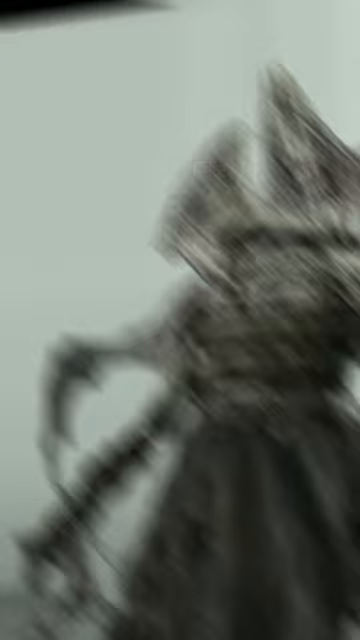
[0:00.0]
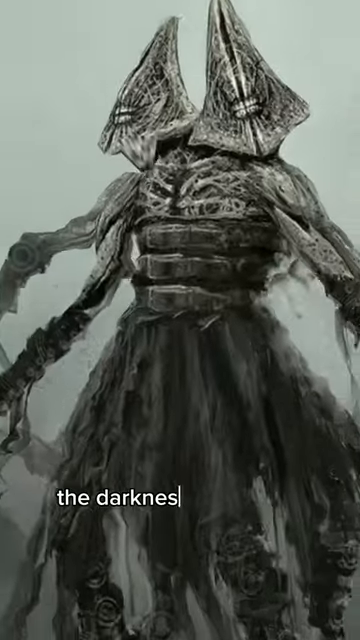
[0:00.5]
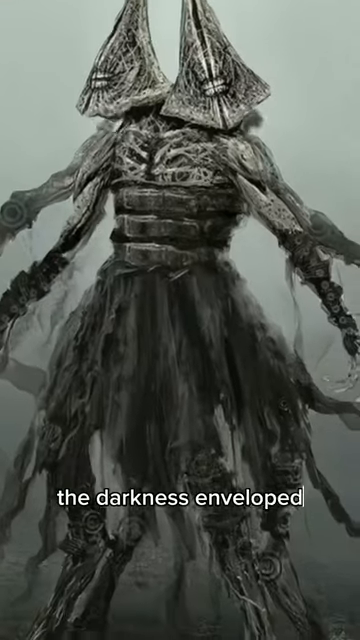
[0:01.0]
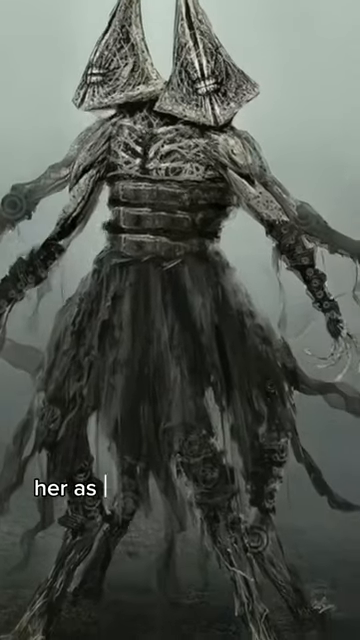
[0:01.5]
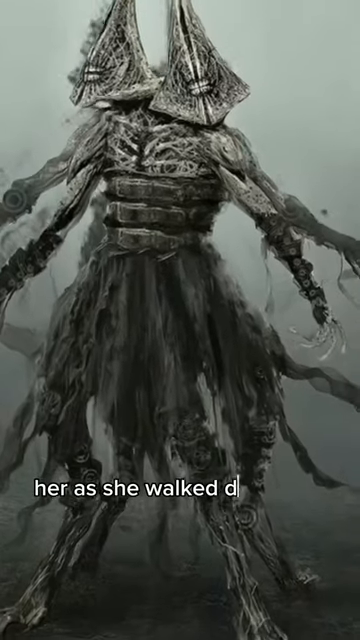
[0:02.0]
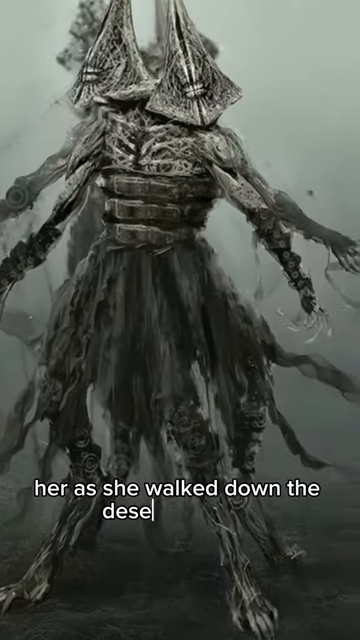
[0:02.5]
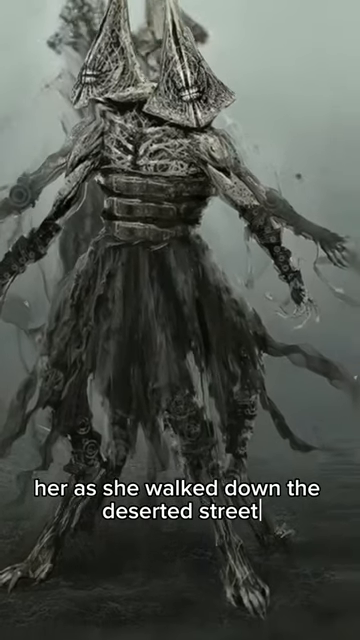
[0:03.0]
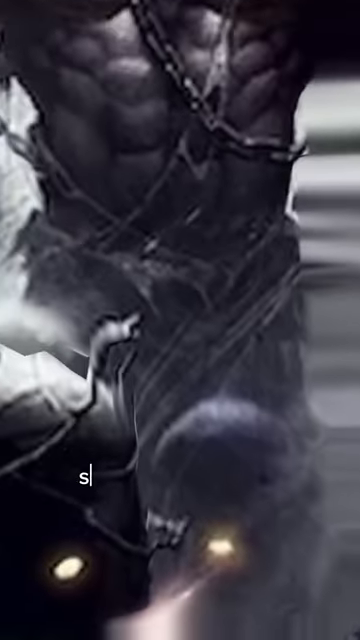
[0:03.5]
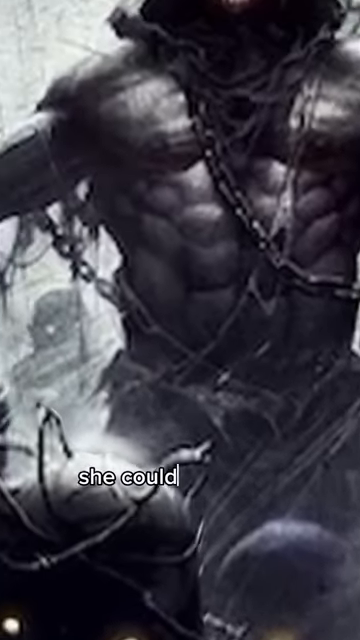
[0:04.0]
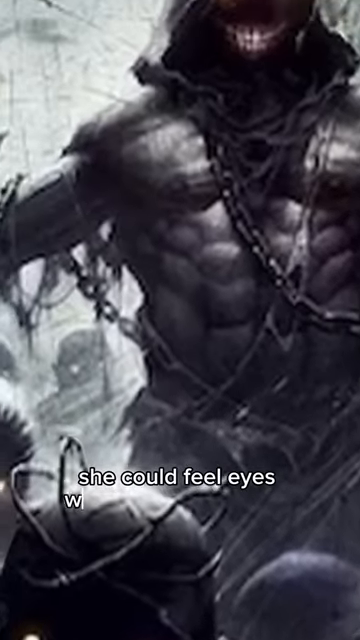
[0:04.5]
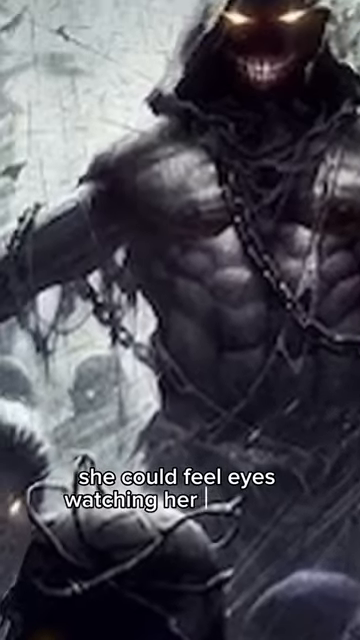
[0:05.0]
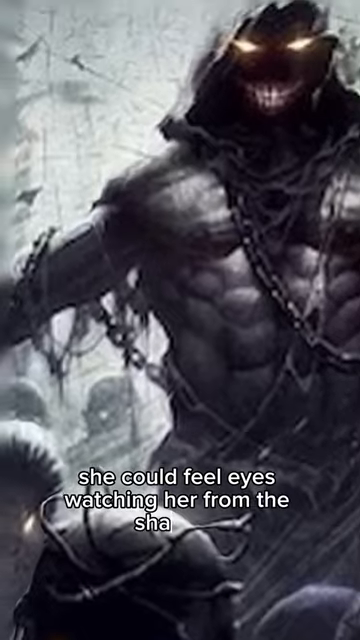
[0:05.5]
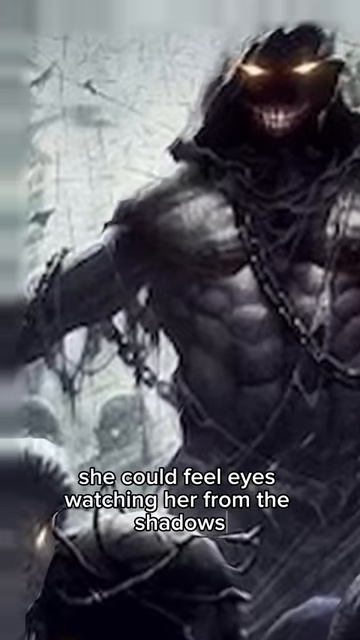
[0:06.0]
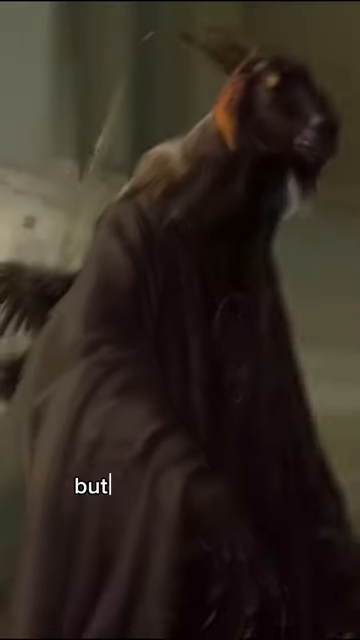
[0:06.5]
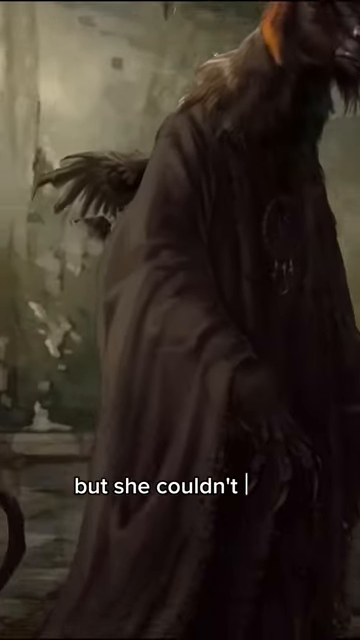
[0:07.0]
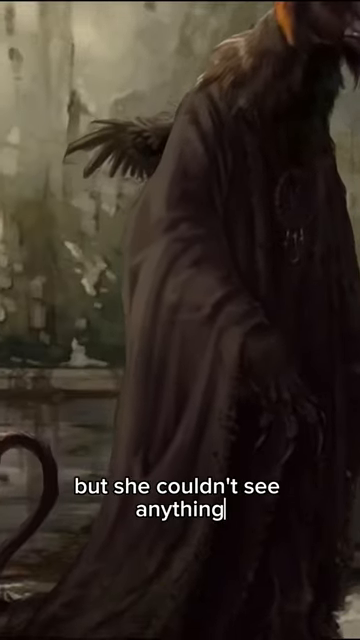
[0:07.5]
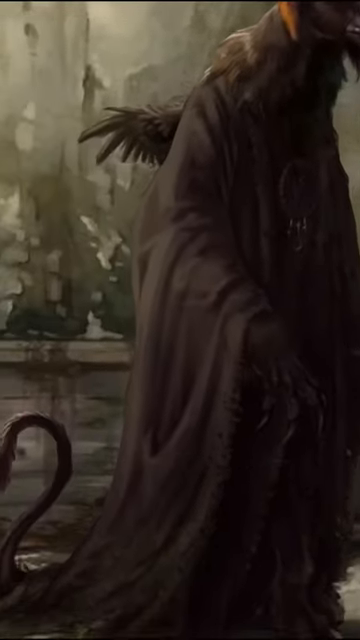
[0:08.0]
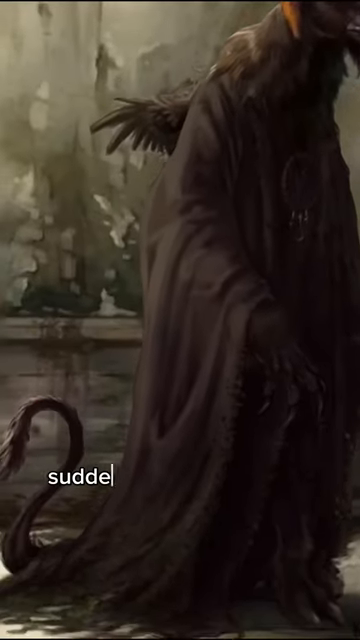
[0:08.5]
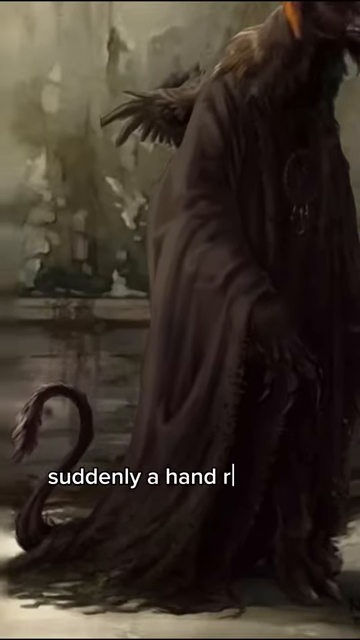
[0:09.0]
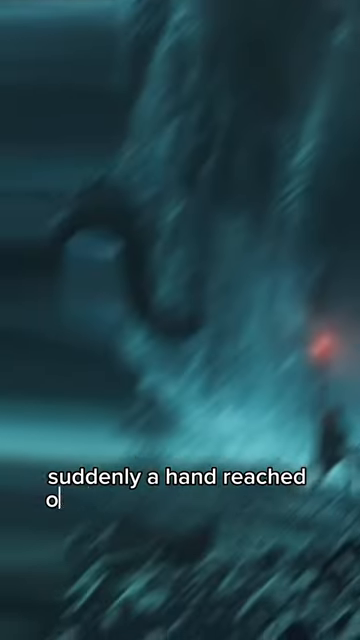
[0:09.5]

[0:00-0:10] The footage appears to come from a video game, possibly a cutscene rather than actual gameplay. It is made up of still shots showing a monster that has two heads and four arms, along with a woman. Text on screen tells of a woman being watched, and the monster apparently watches her. Nothing much changes visually; the narrative simply moves along.